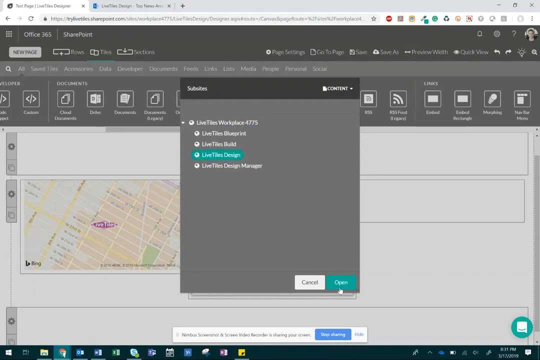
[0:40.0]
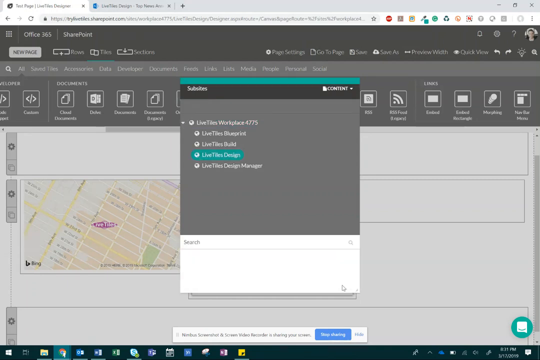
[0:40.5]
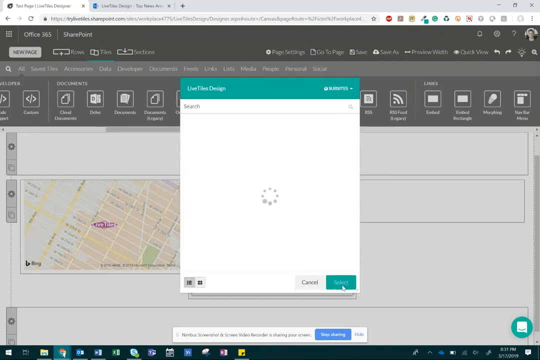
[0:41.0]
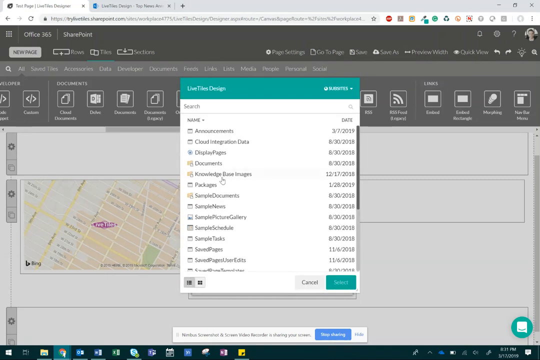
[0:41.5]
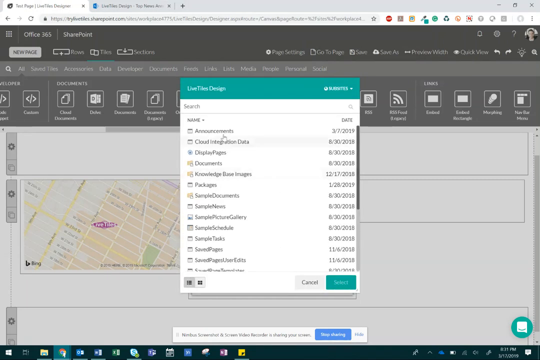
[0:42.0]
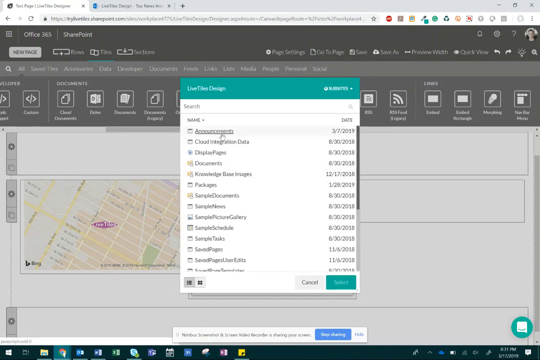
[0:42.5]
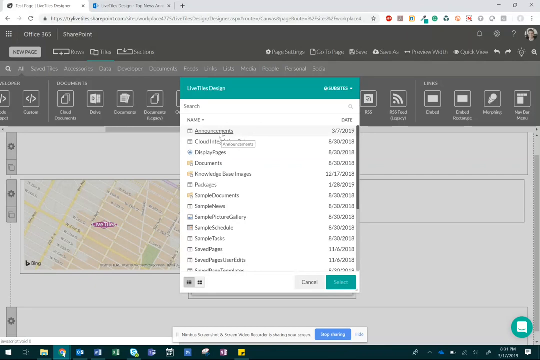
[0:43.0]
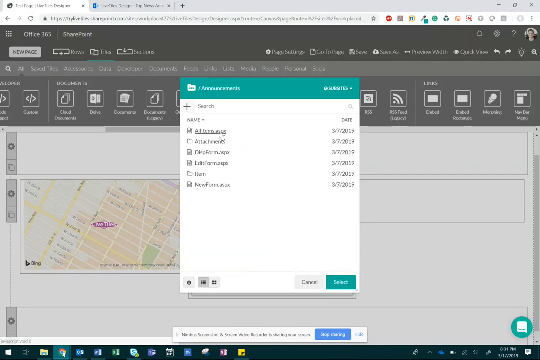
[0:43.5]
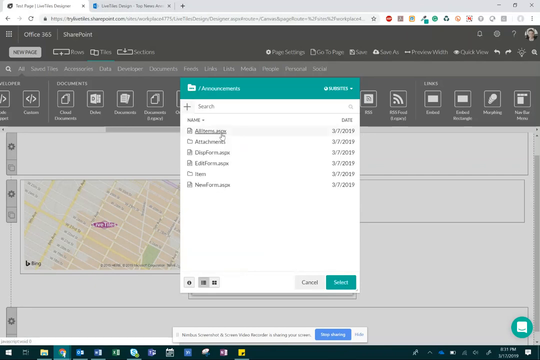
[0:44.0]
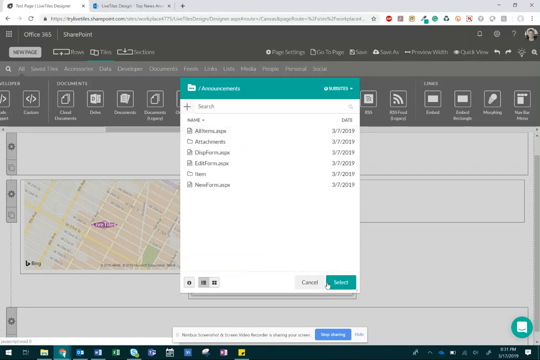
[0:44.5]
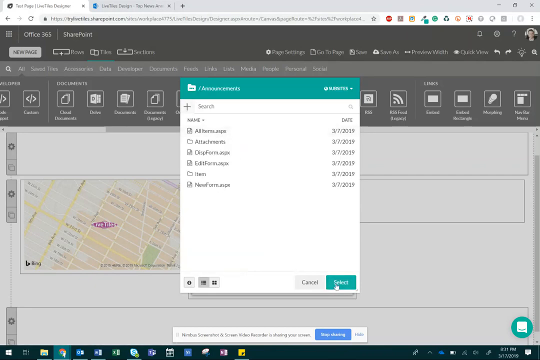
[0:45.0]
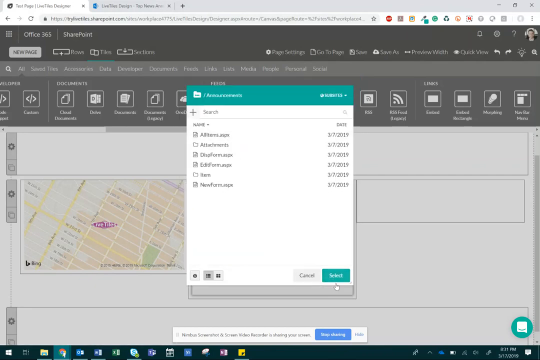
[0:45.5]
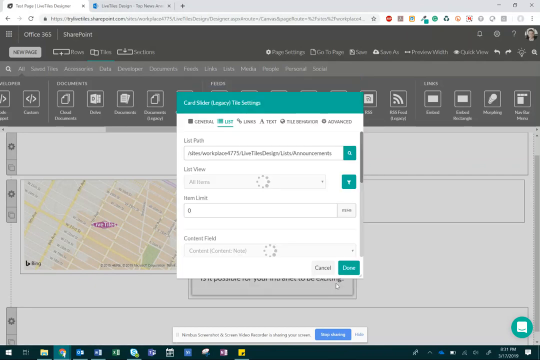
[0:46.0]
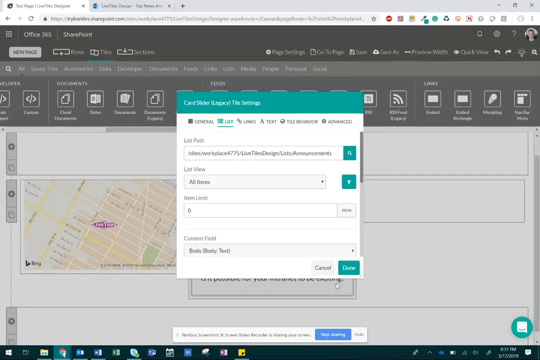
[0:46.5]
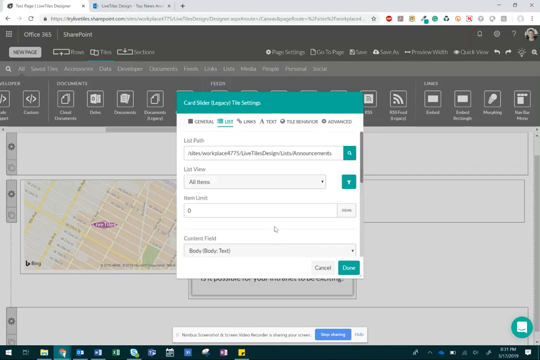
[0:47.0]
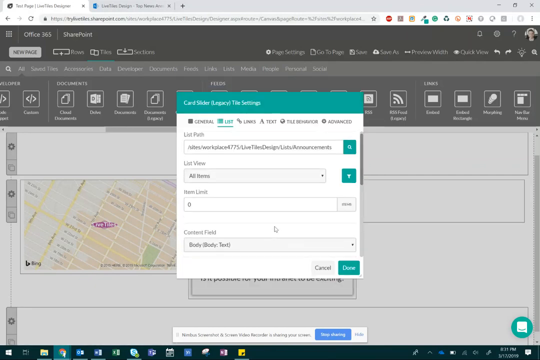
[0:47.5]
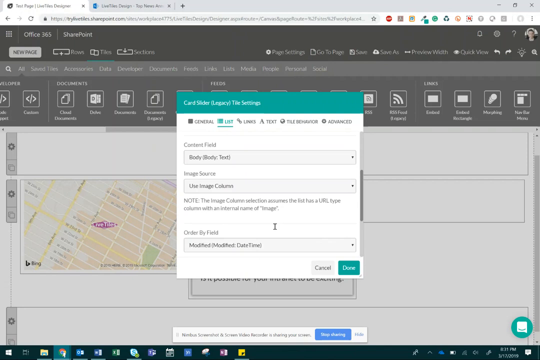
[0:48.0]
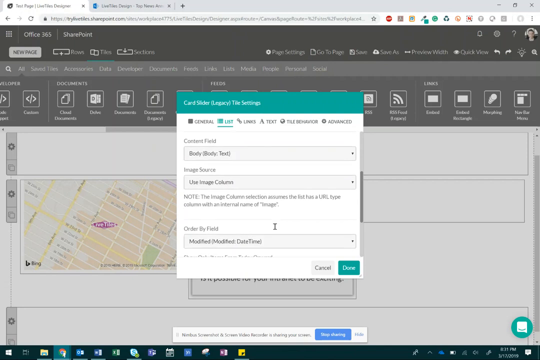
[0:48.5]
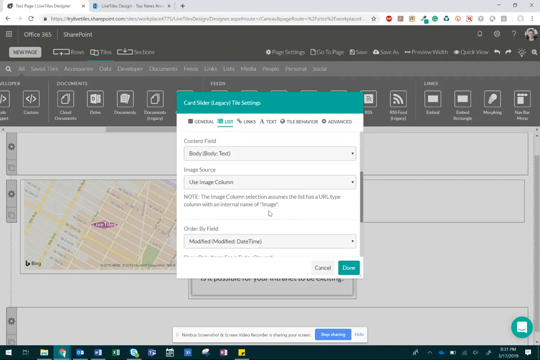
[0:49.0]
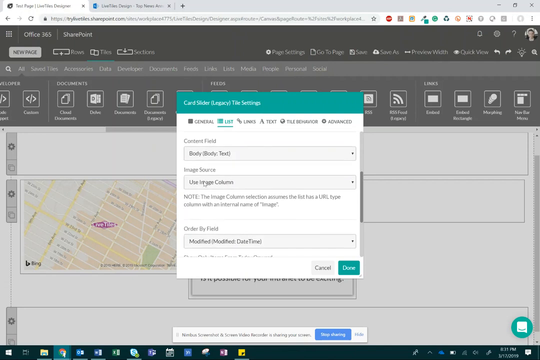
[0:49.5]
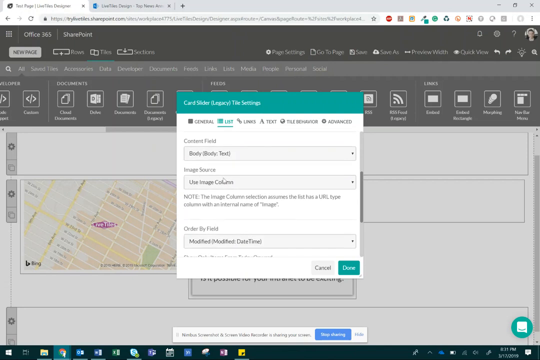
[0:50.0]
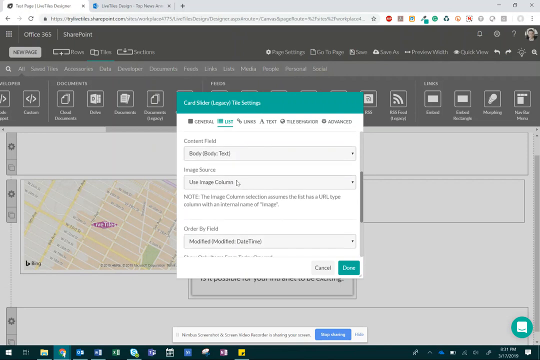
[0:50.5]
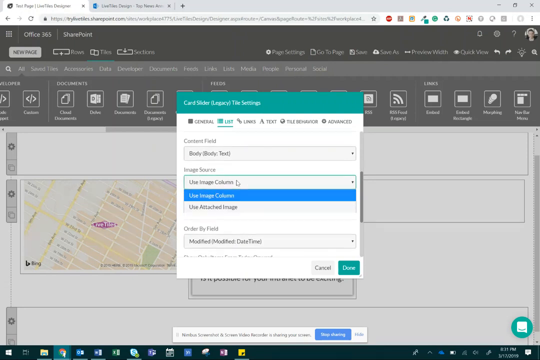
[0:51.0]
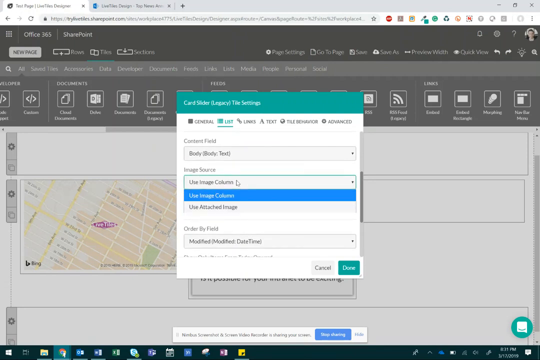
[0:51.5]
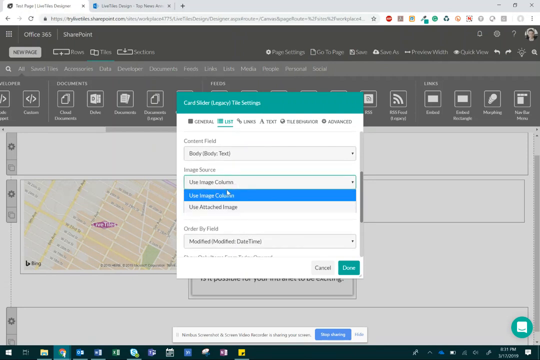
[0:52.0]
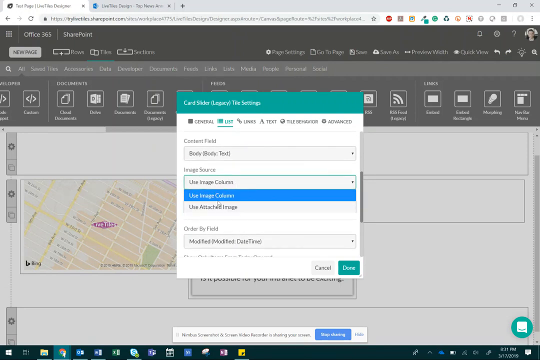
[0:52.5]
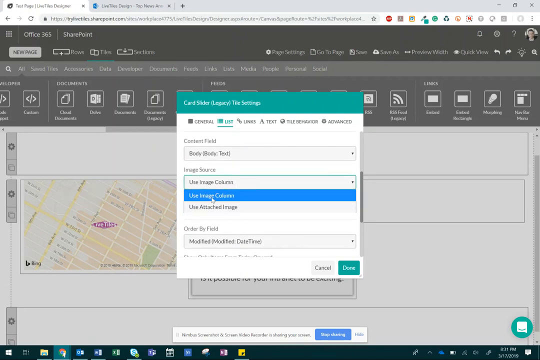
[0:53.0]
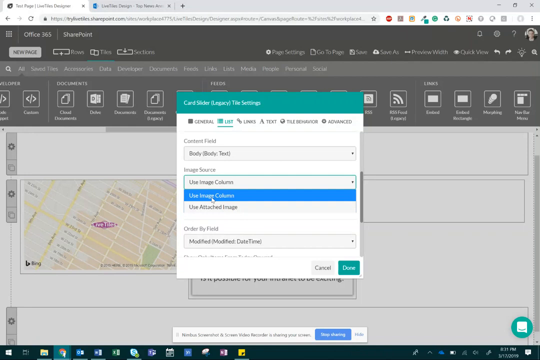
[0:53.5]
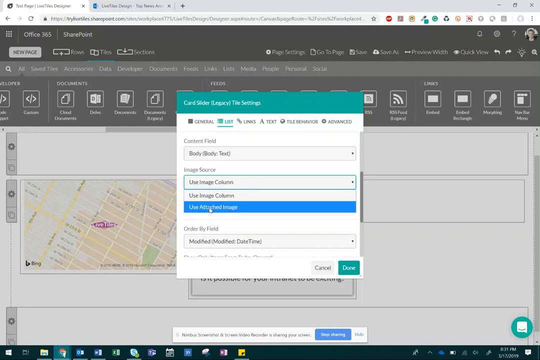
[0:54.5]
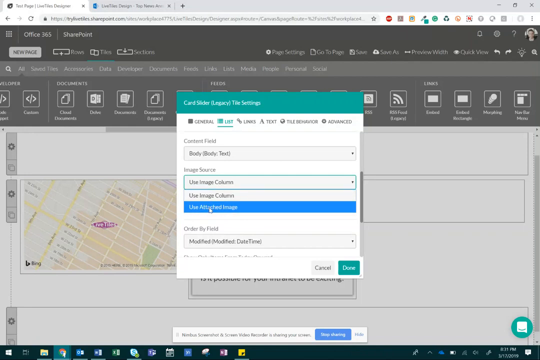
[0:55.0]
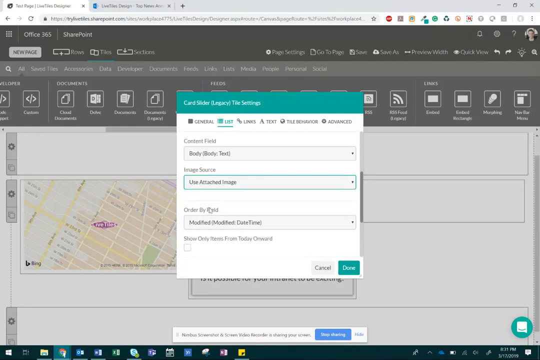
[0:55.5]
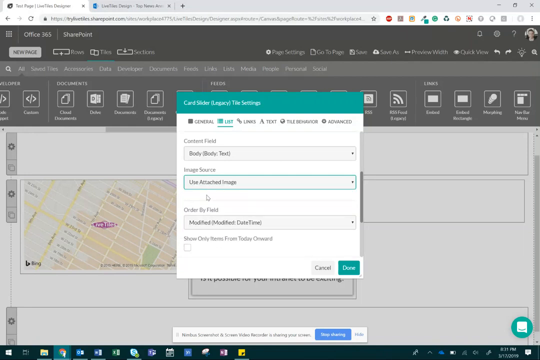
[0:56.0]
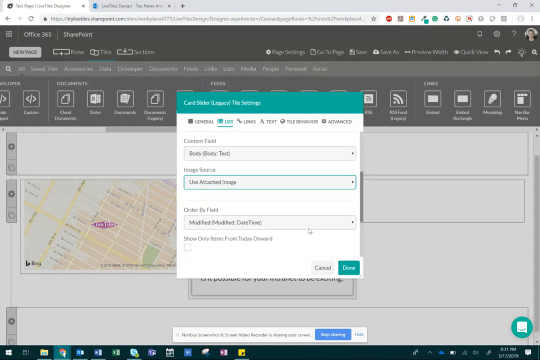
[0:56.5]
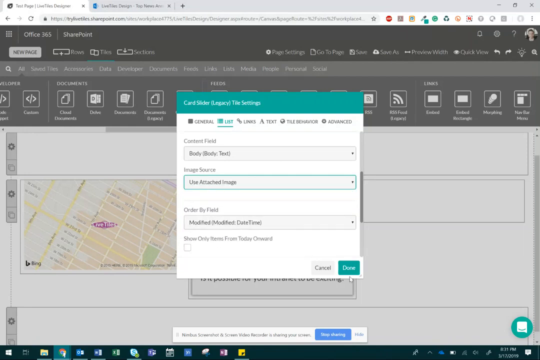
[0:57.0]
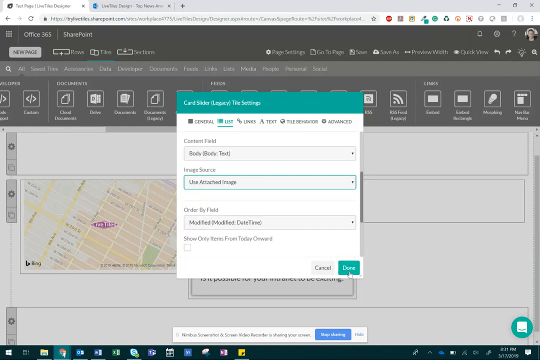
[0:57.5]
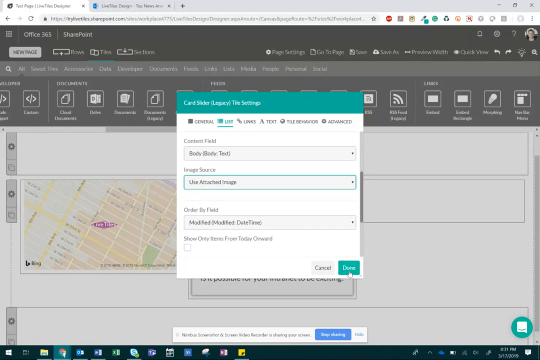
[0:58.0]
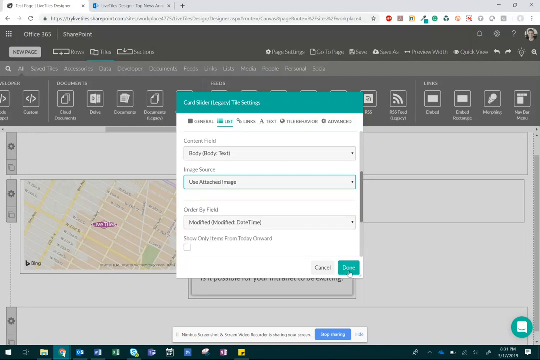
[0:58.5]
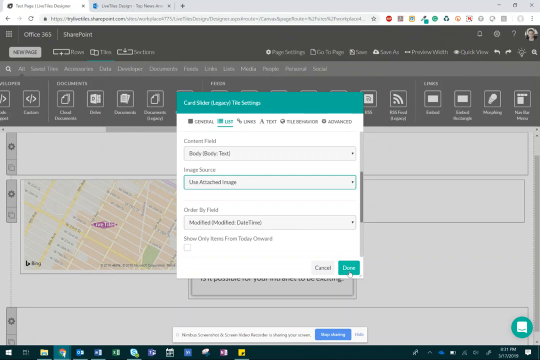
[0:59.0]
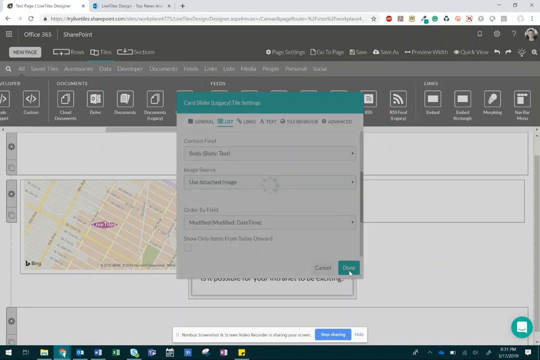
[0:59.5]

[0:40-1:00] The top of the website has a black background with various icons, and beneath it is a white background with various rectangles that have black outlines. On the middle left of the website a map is visible. A selection tab appears over the middle part of the screen with a list of different values that can be chosen. One is chosen, and it lists different files along with their dates. The tab's background is white with a turquoise heading on top. At the bottom there is a "next" button with a turquoise background and a "cancel" button with a white background. With each selection a new tab opens. There are various columns, one of which is a list of options that can be chosen. The tab is scrolled down, revealing more options, among them "use image column" and "use attached image". A change is made within the tab from the image column to using the attached image, and the mouse then hovers over them.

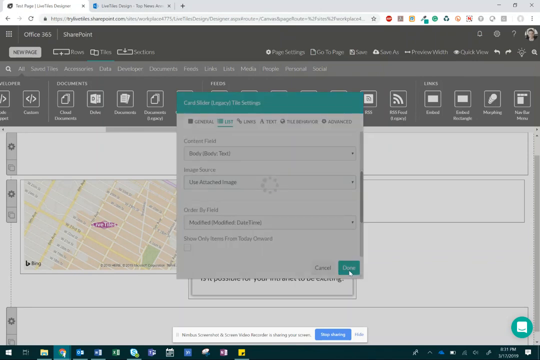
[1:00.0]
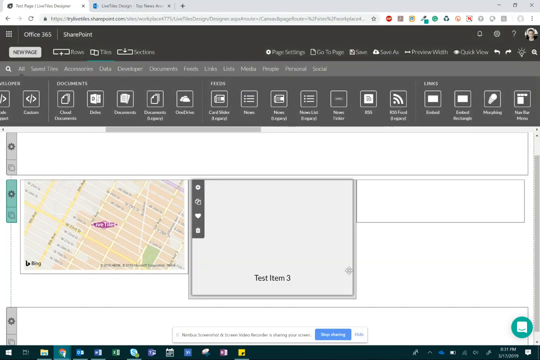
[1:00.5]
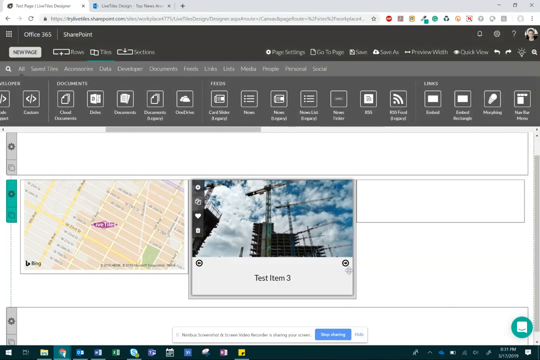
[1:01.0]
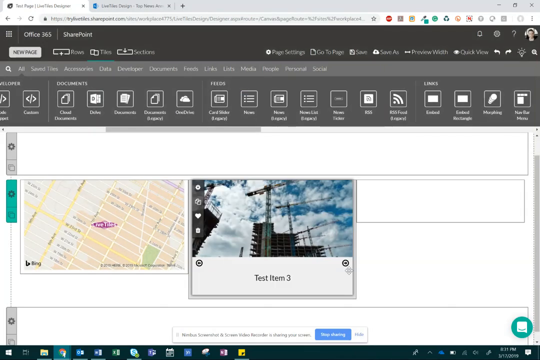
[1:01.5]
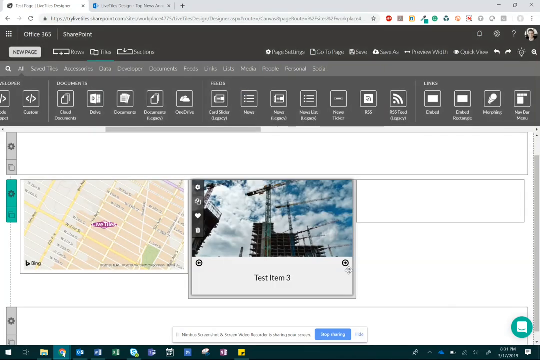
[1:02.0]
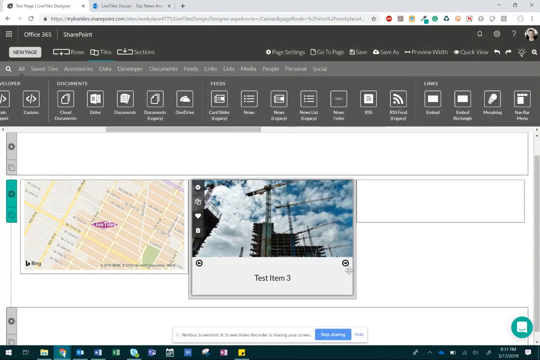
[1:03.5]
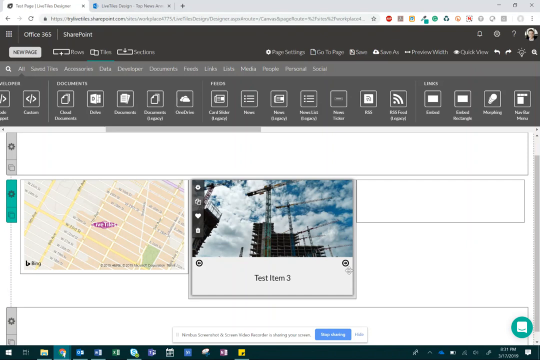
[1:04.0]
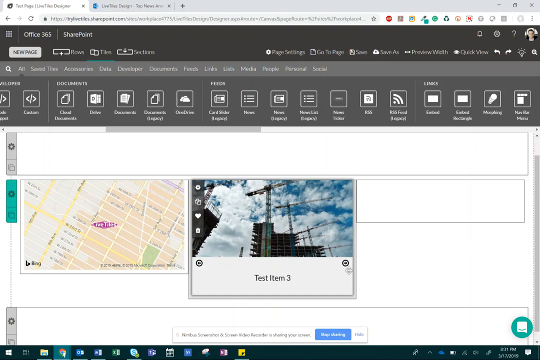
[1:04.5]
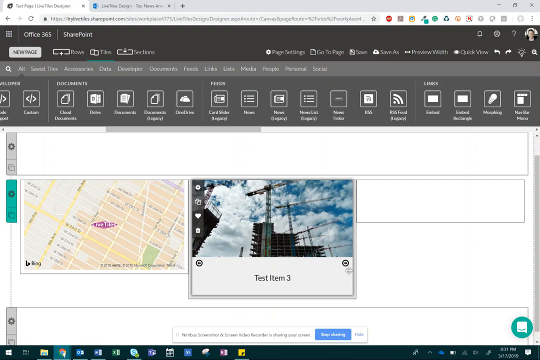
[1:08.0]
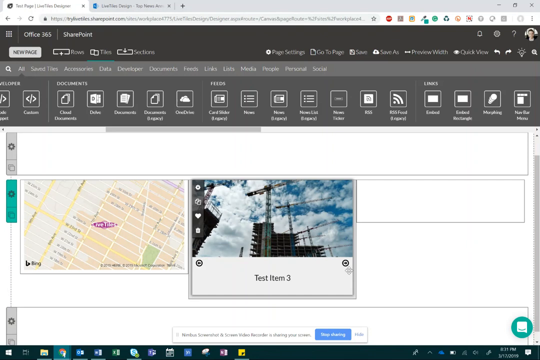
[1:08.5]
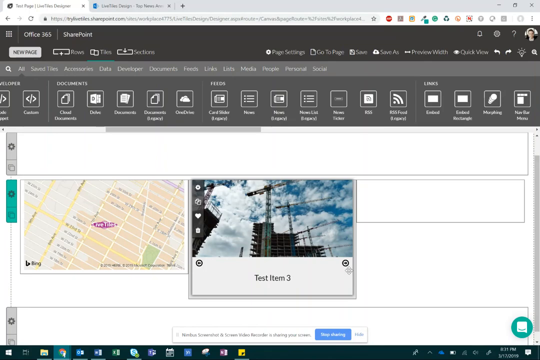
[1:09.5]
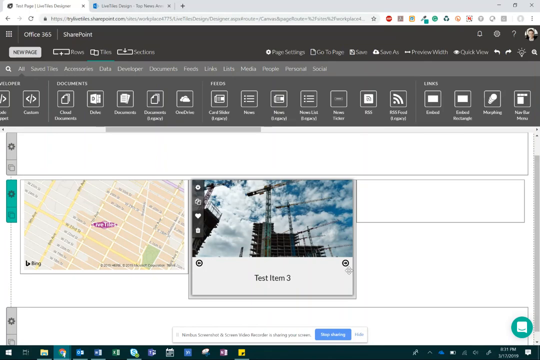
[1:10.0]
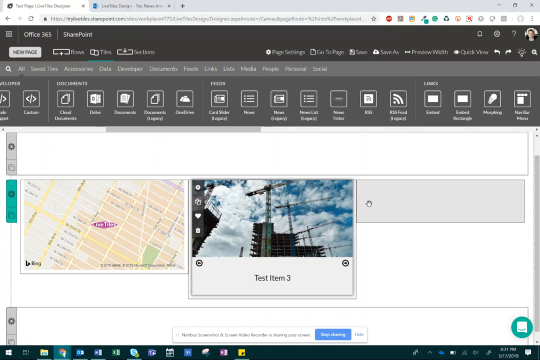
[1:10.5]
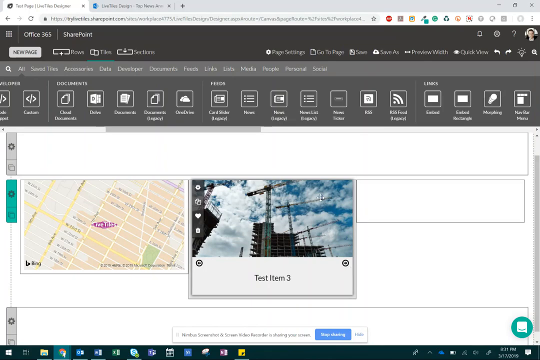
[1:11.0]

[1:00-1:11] The screen has a black background on top with various icons and a white background below with various rectangles that have black outlines. A map is on the middle left of the screen, and an open tab in the center has a turquoise heading and a white background elsewhere. A loading icon appears and the tab shifts. Once the loading icon disappears, an image is shown, with "test image 3" written underneath it. A line of text toward the bottom of the screen shows that the person is sharing their screen. A chat function and icon are on the bottom right of the screen, with a turquoise background and a white messaging icon. The mouse moves around the screen over the image to the rectangle just to the right of it.